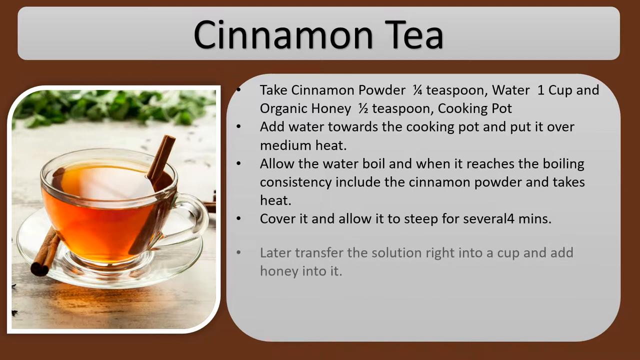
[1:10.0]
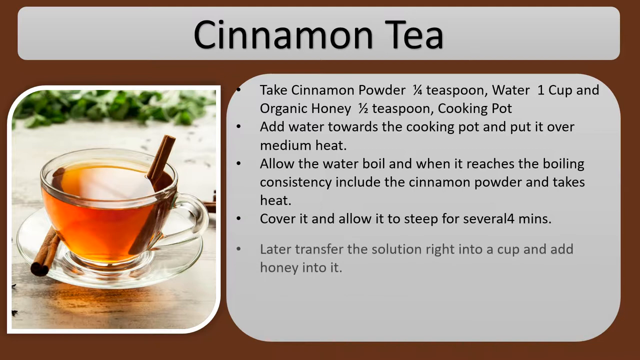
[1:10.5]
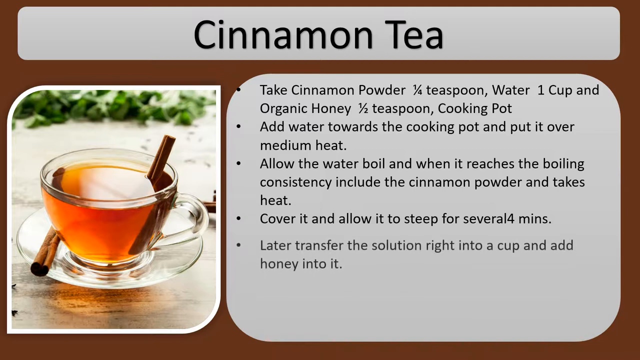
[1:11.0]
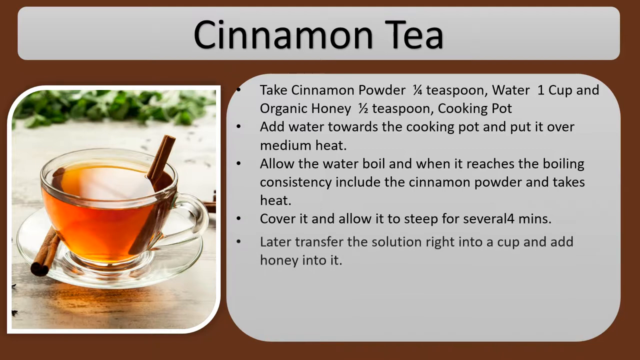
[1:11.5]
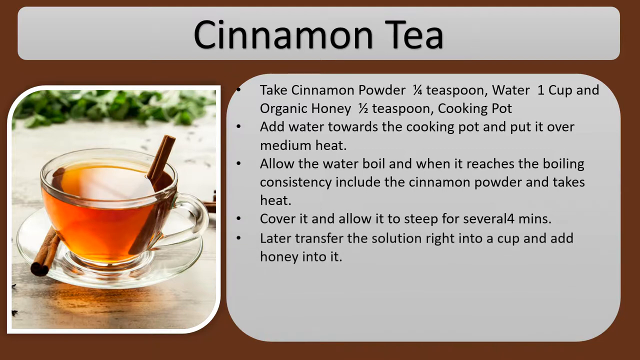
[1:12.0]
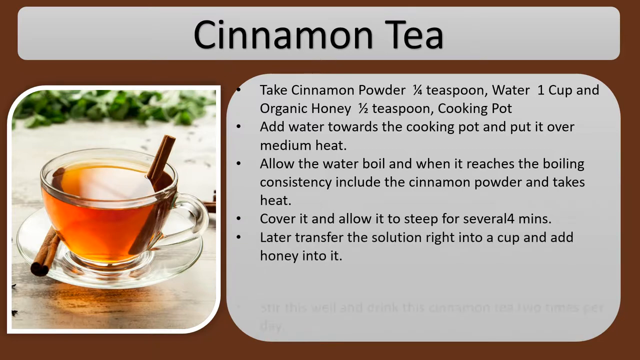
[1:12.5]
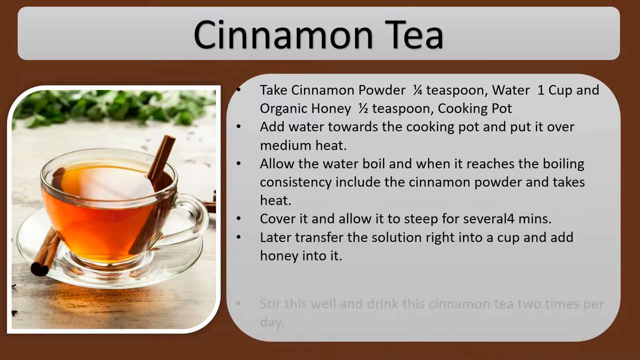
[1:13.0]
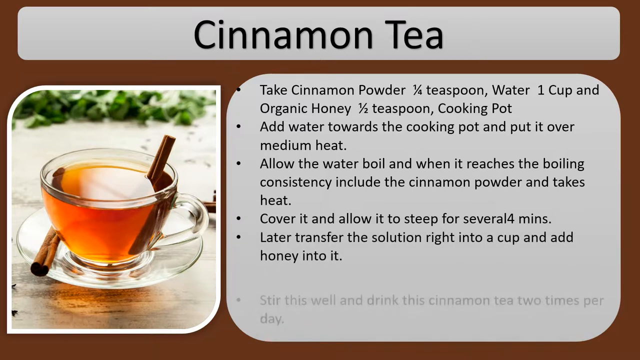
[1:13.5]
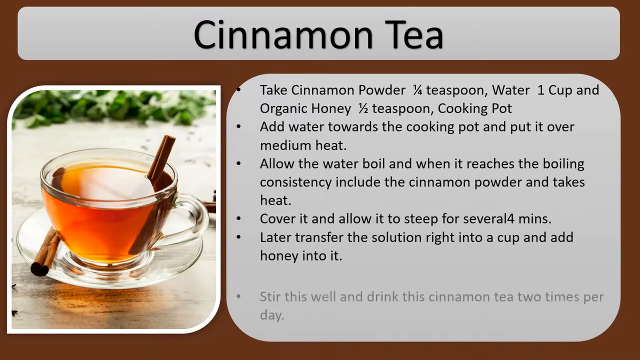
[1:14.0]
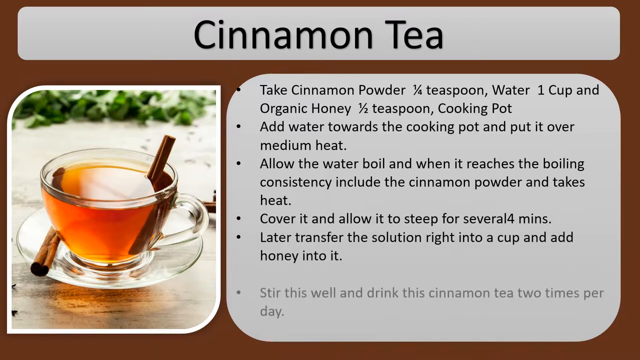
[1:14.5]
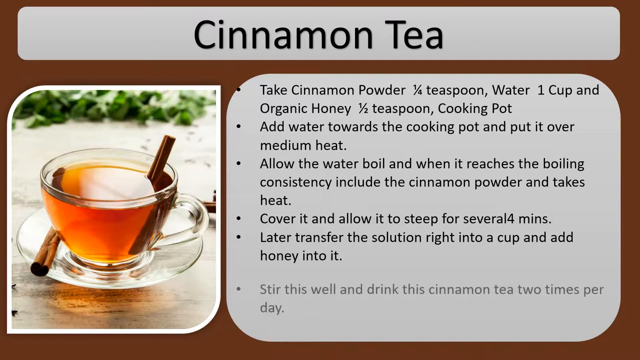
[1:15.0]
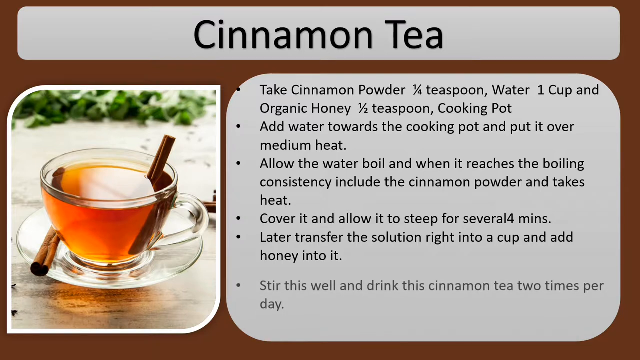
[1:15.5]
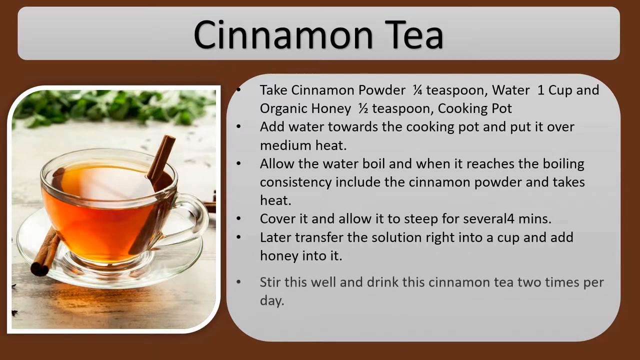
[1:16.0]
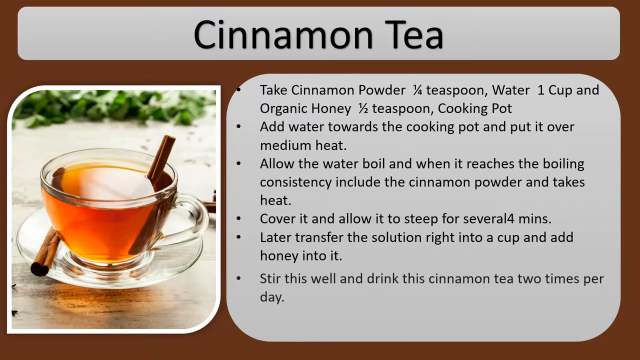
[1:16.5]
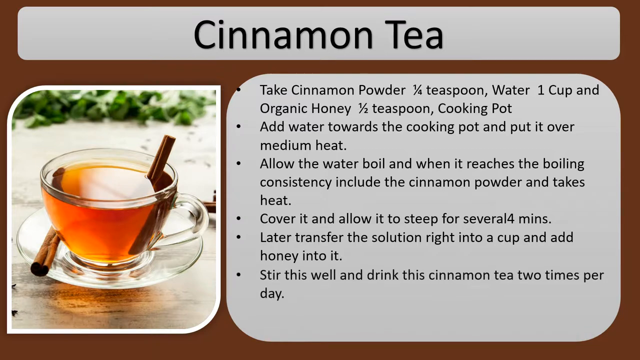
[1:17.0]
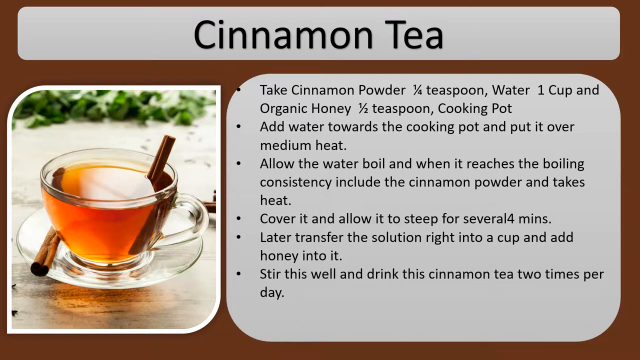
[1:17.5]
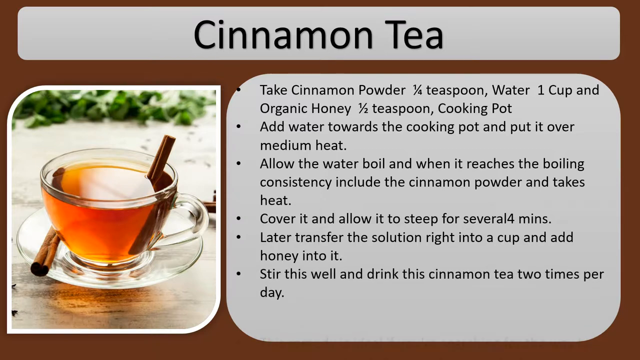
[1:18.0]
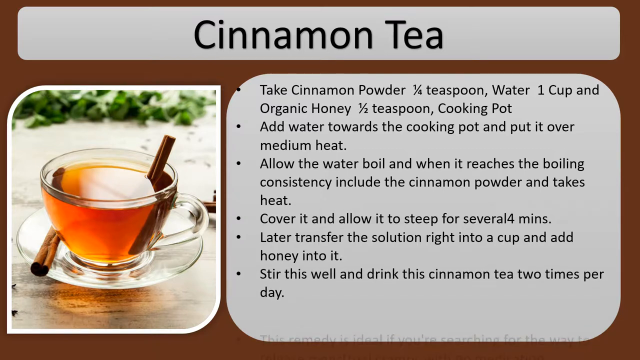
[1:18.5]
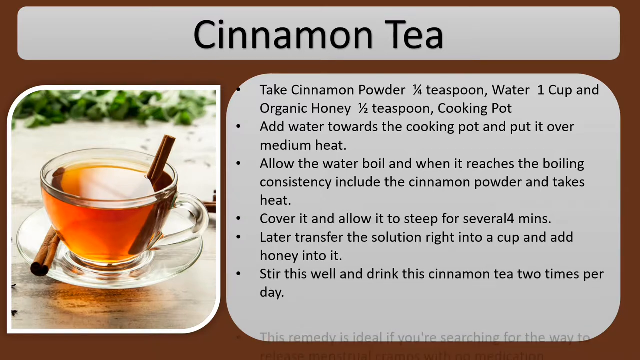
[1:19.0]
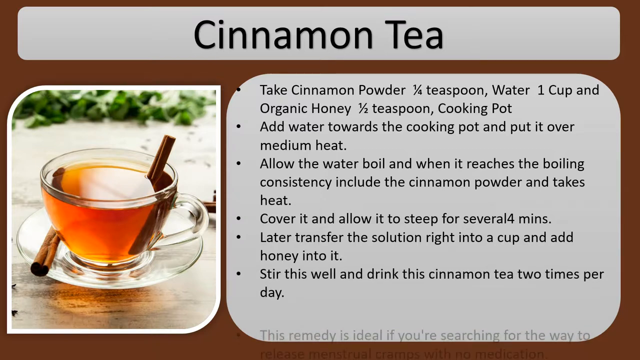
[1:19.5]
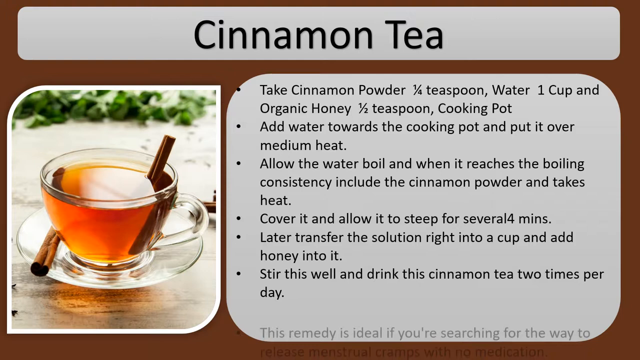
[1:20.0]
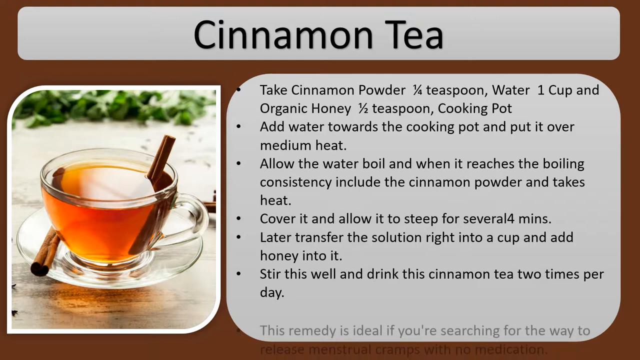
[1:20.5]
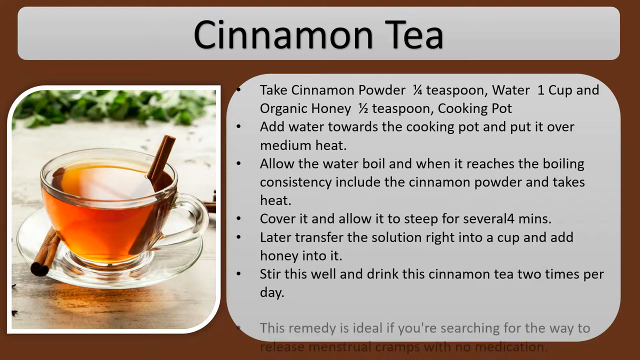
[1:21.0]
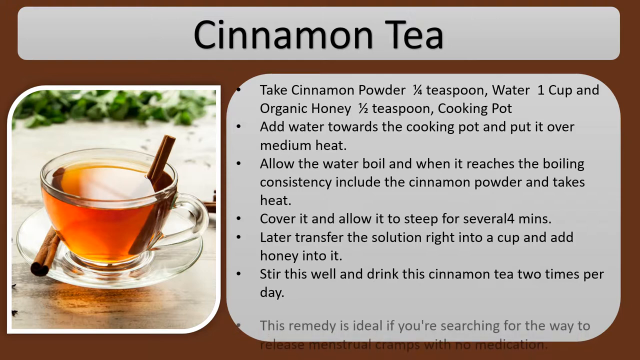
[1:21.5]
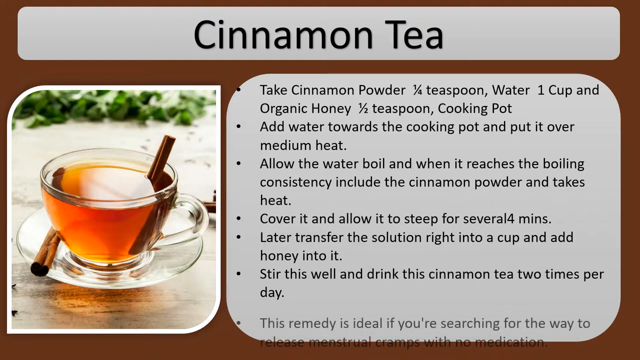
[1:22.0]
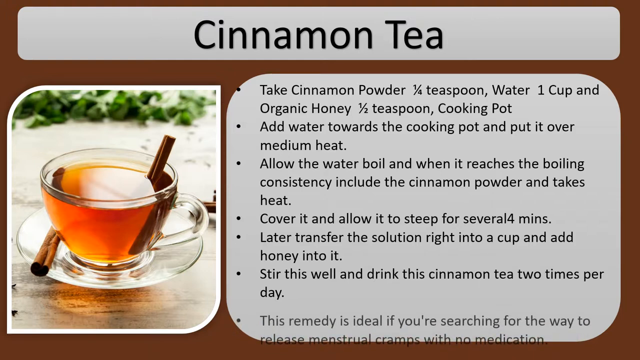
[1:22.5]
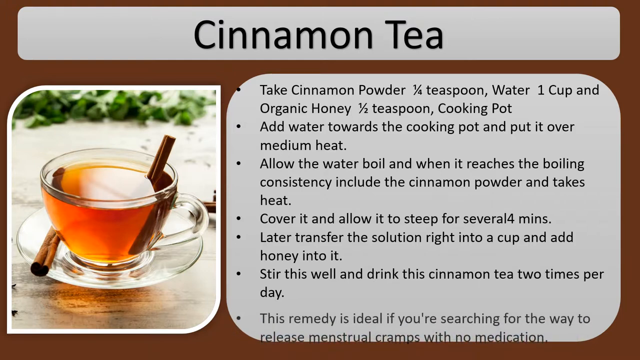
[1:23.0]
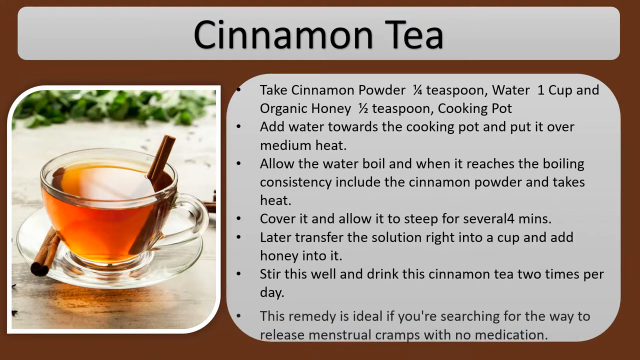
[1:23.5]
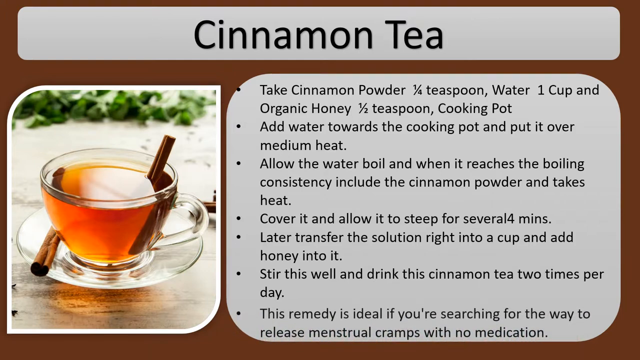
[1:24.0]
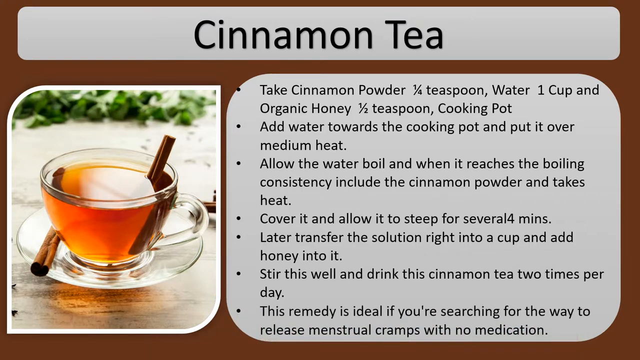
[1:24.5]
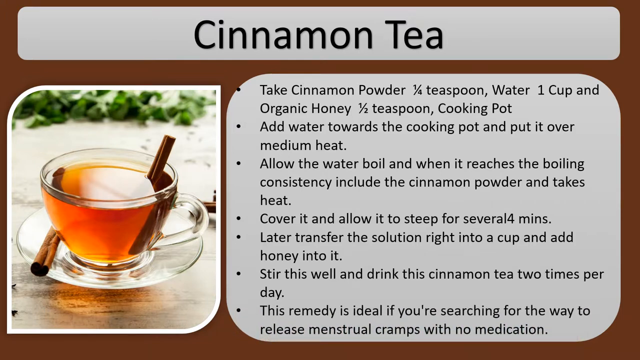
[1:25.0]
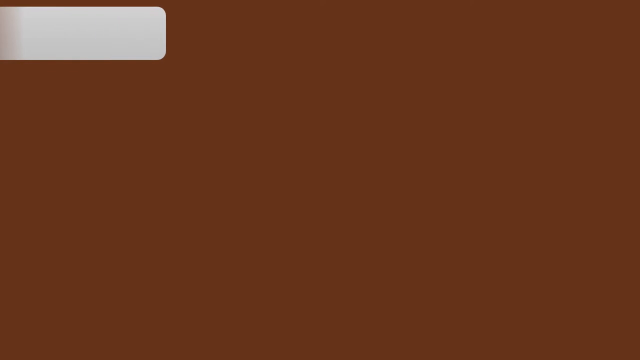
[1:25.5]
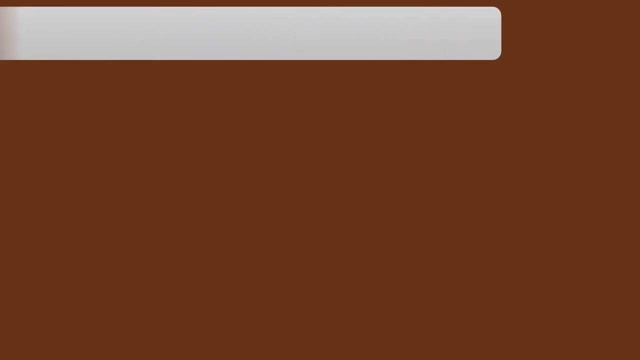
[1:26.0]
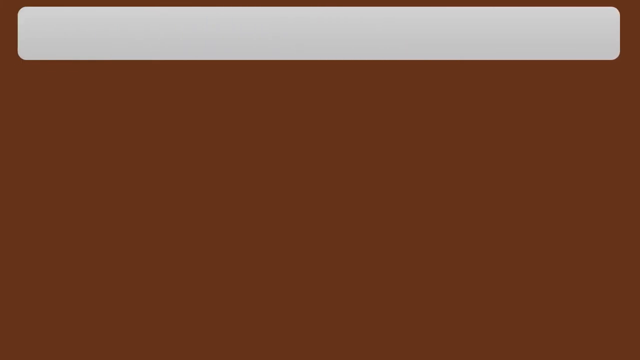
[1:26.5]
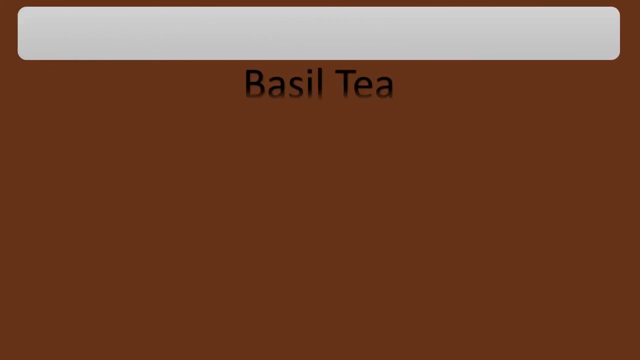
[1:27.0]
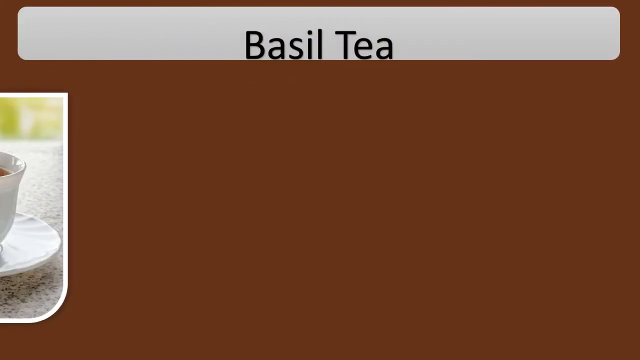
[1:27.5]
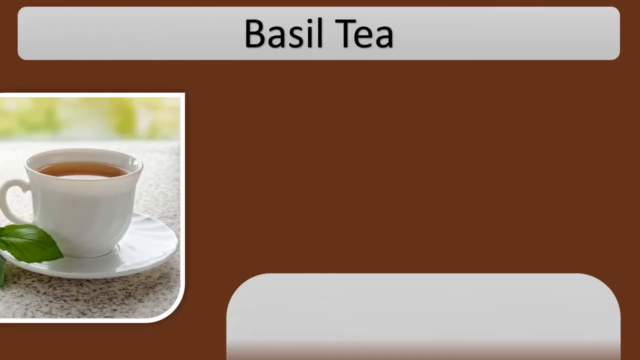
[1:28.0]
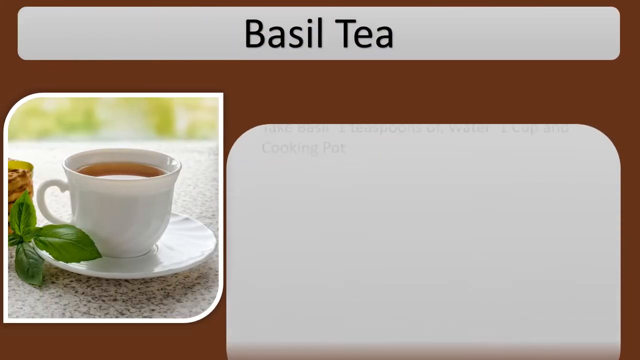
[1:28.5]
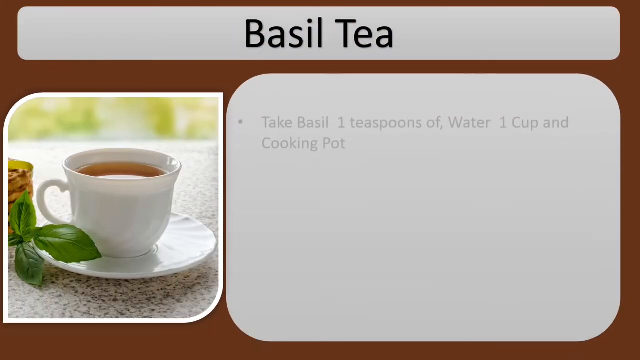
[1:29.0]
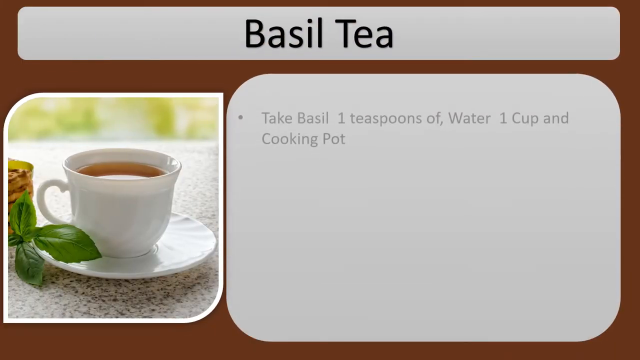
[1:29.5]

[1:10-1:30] The bullet point "later transfer the solution right into a cup, add honey to it" is on screen, followed by "stir this well and drink this cinnamon tea two times per day." The next point reads "this remedy is ideal if you're searching for the way to release menstrual cramps with no medication." A new slide for another home remedy follows, titled "basil tea." To the left of the information is a photo of a small, opaque white teacup with tea inside, on a saucer on a table, with a couple of basil leaves next to it. The first point appears: "take basil, one teaspoons of water, one cup and cooking pot."